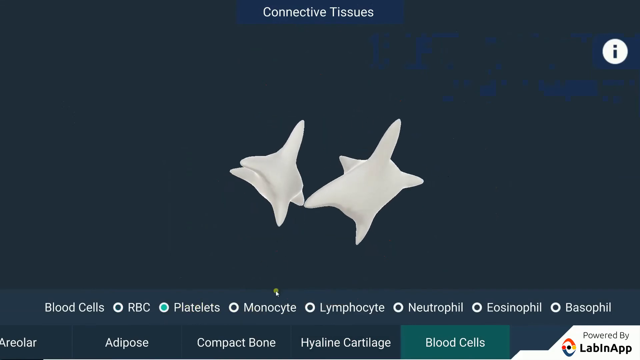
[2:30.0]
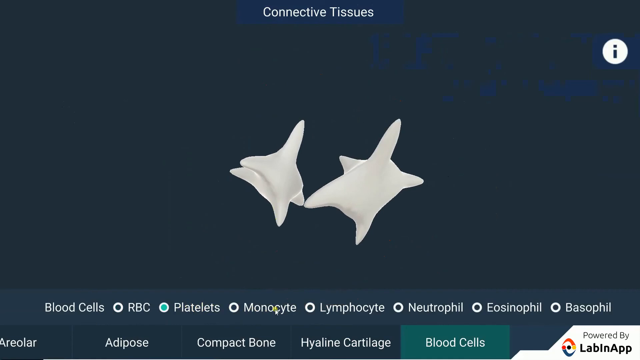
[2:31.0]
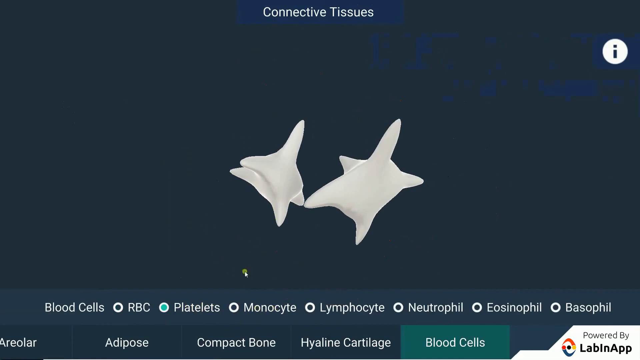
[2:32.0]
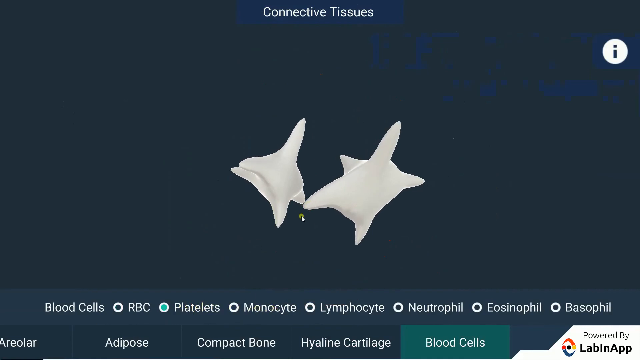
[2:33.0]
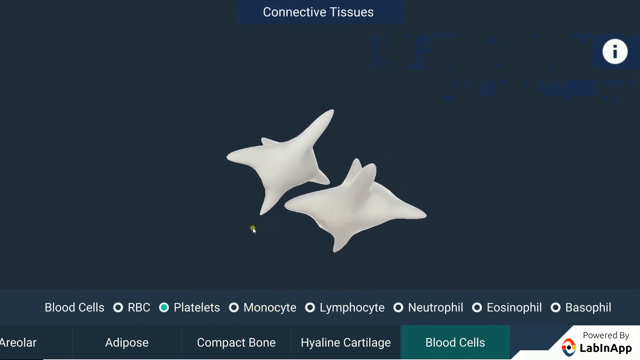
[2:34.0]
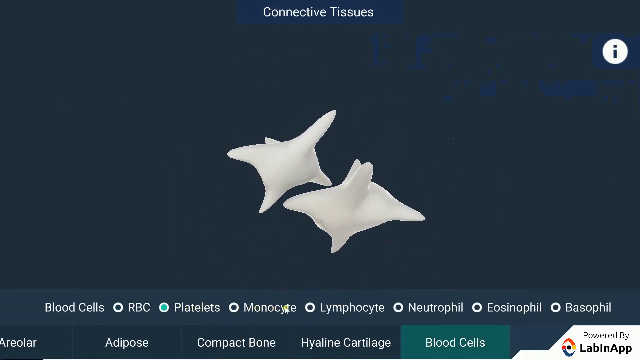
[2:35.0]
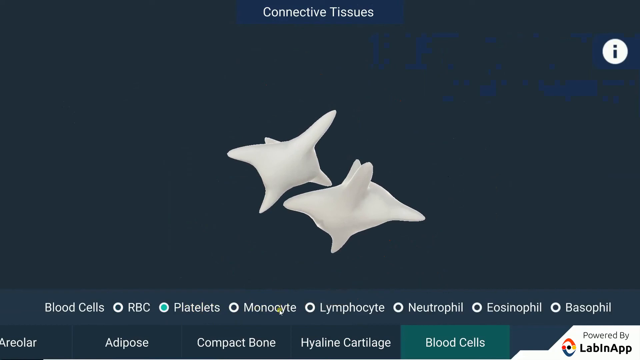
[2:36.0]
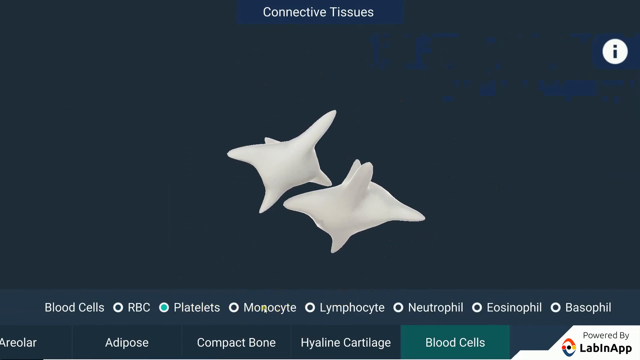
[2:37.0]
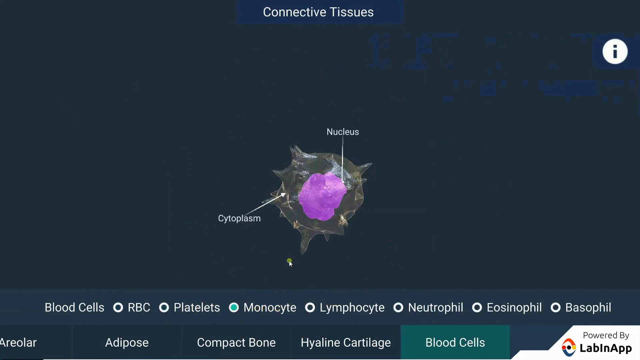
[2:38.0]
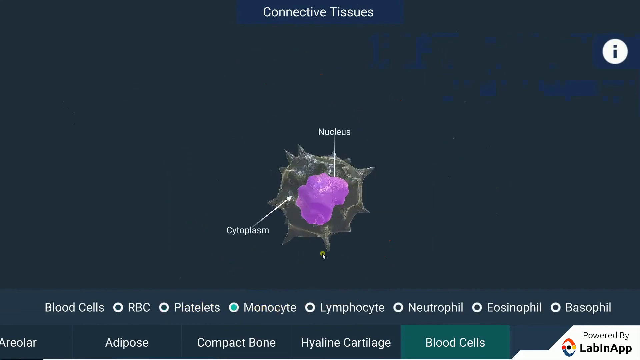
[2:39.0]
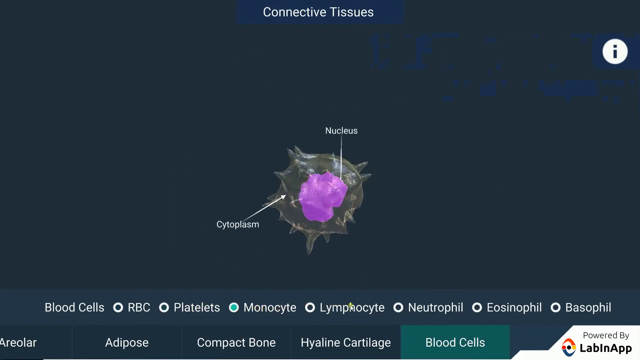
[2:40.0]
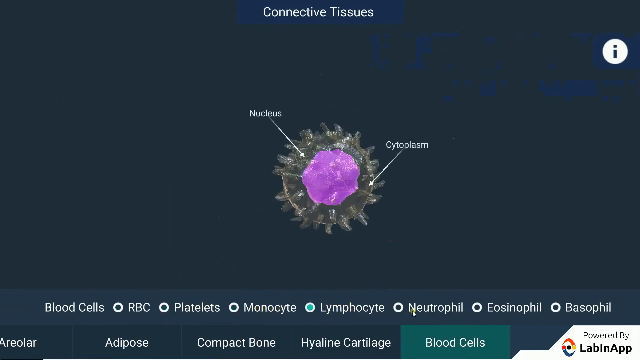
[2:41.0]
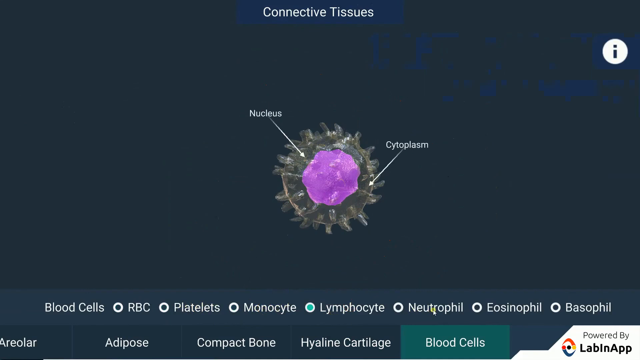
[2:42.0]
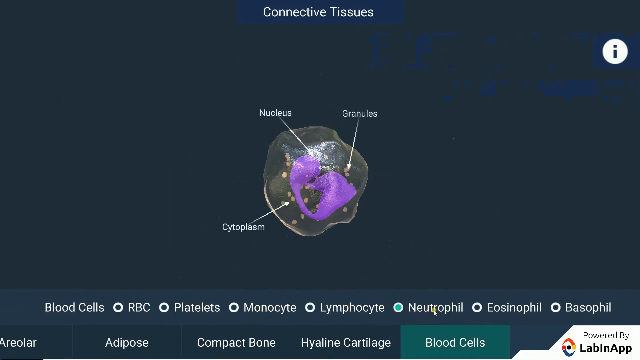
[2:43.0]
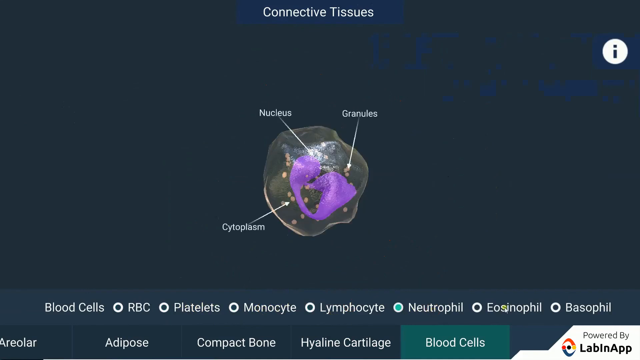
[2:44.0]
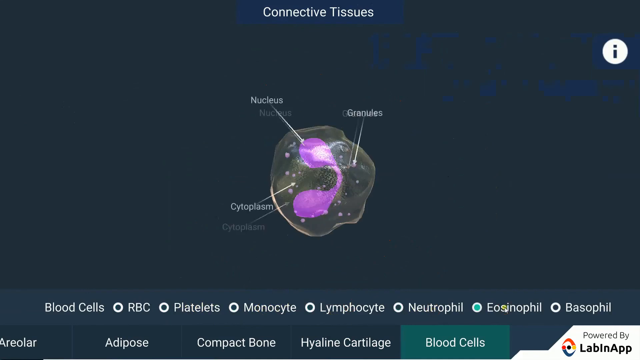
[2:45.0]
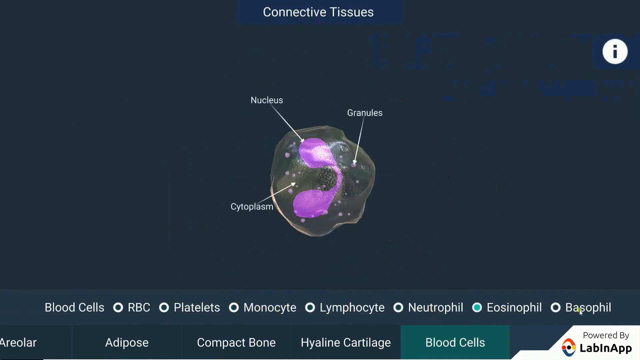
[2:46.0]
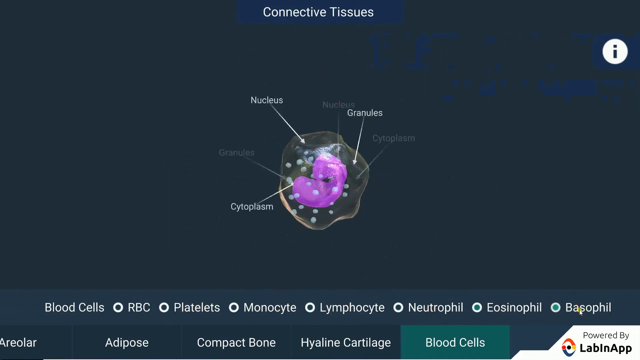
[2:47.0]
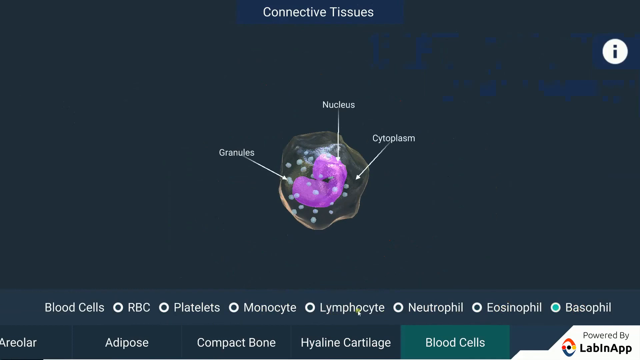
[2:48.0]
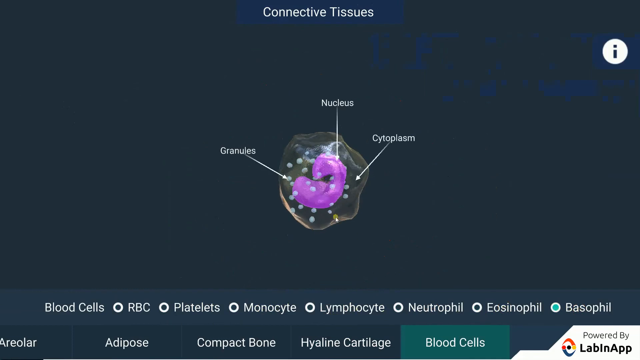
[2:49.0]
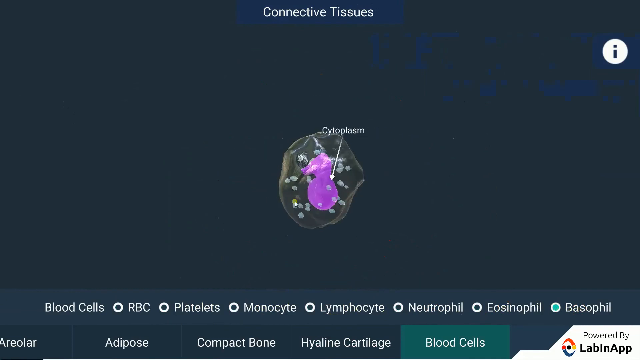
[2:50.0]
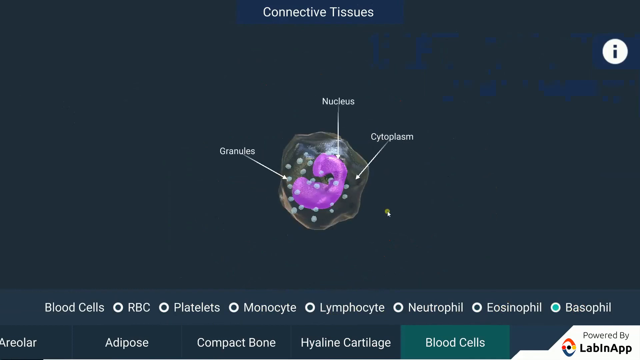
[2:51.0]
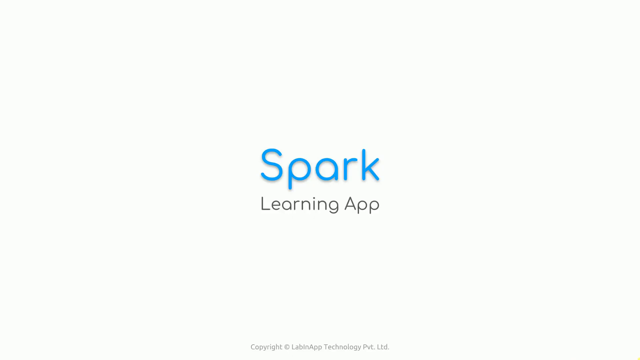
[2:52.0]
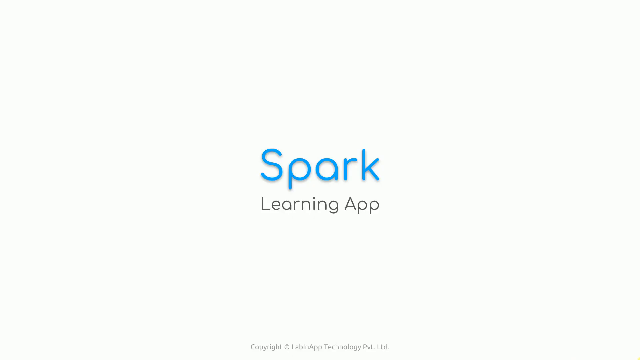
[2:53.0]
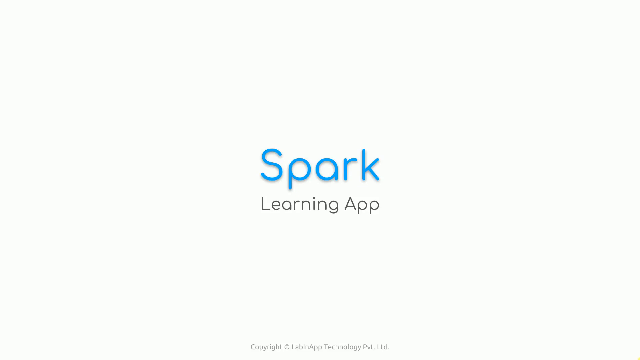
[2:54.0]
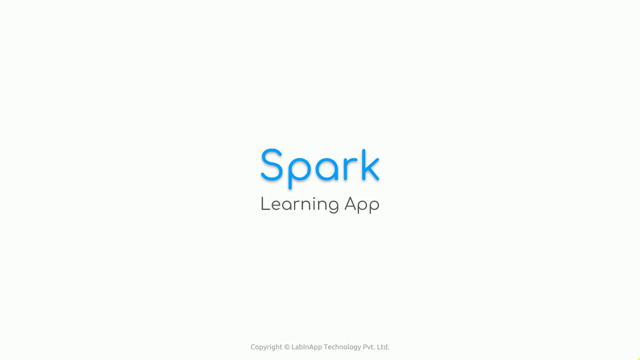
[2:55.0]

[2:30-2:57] The blood cell is shown very briefly, with text that says "Blood is a fluid connective tissue. It consists of a liquid matrix called the plasma, in which blood cells are present." This rendering has no labels, and the user goes instantly to the next option in the menu, which still says "Blood Cells" but has sub-options below such as "Platelets," "Monocyte," "Lymphocyte" and "Neutrophil," among others. The user chooses several of them. The Platelets rendering looks like chewed chewing gum, pink or white. The Monocyte cell has a dark, slightly transparent look with a blue core, and two labels: "Nucleus," pointing to the core, and "Cytoplasm," pointing to the cover that surrounds it. The video continues through the different blood cells, which have somewhat similar appearances and share some labels. The video ends with a white screen and text in the center that says "Spark Learning App."